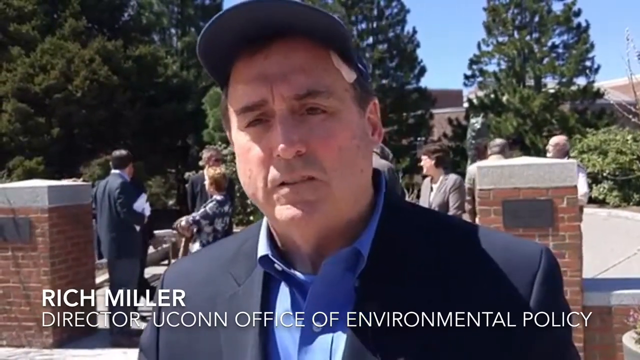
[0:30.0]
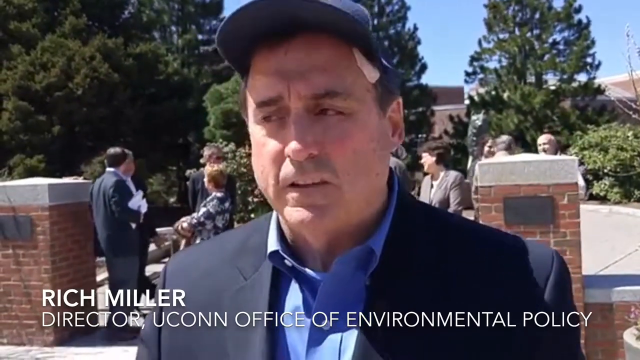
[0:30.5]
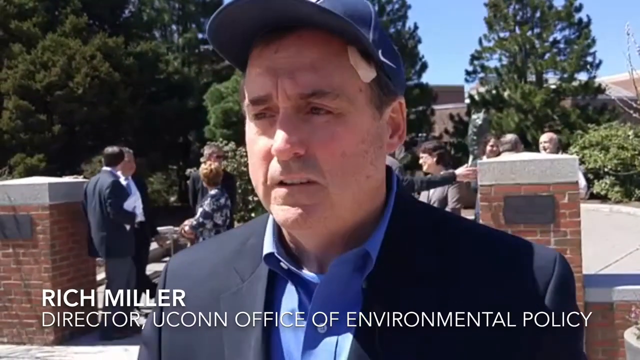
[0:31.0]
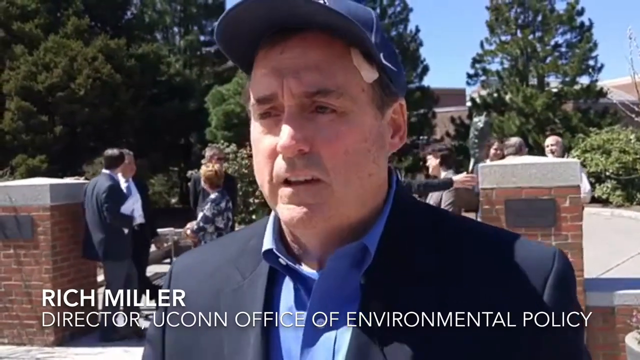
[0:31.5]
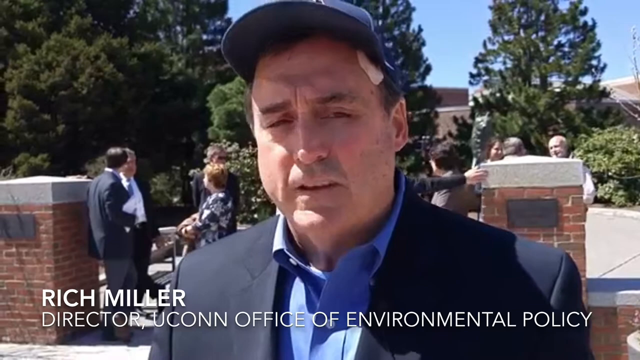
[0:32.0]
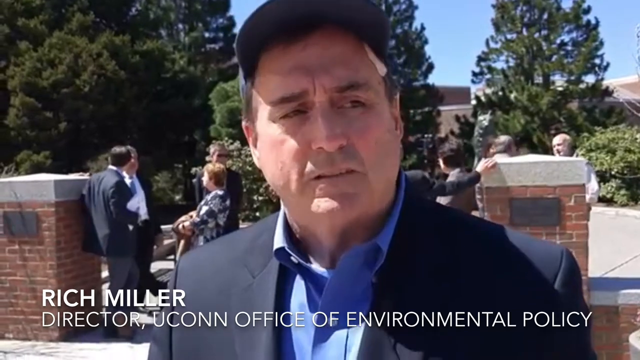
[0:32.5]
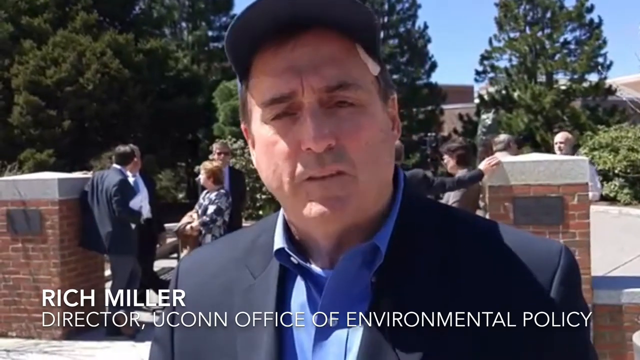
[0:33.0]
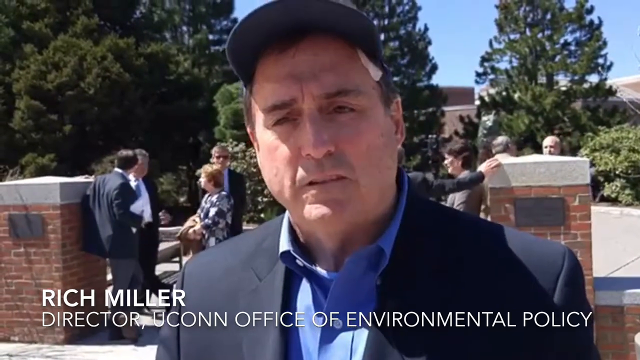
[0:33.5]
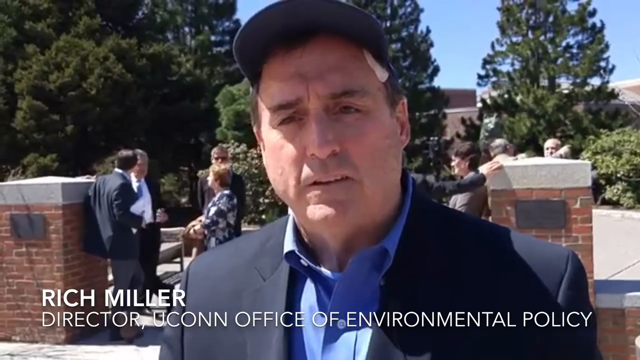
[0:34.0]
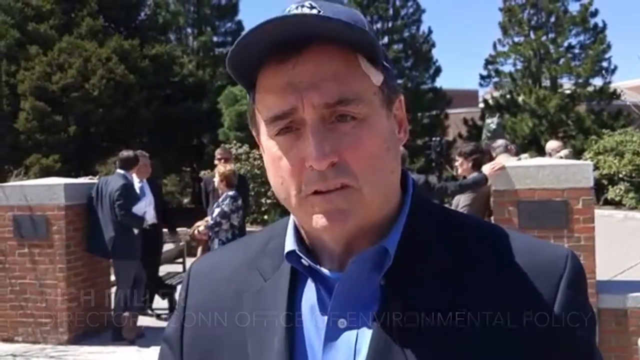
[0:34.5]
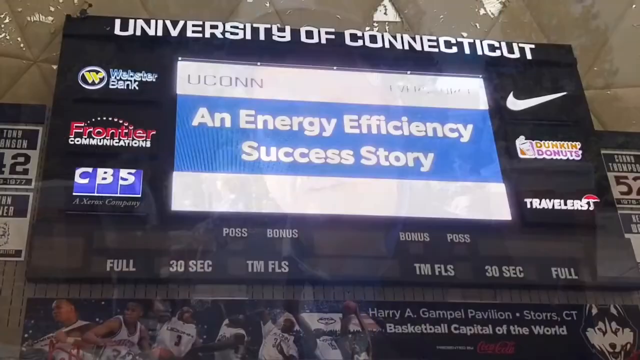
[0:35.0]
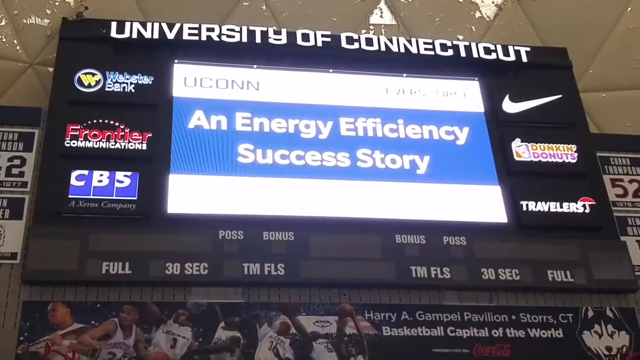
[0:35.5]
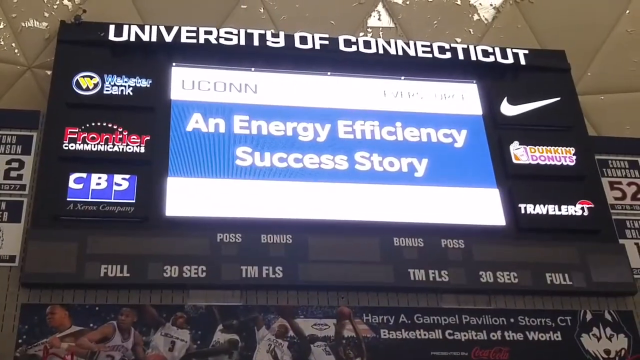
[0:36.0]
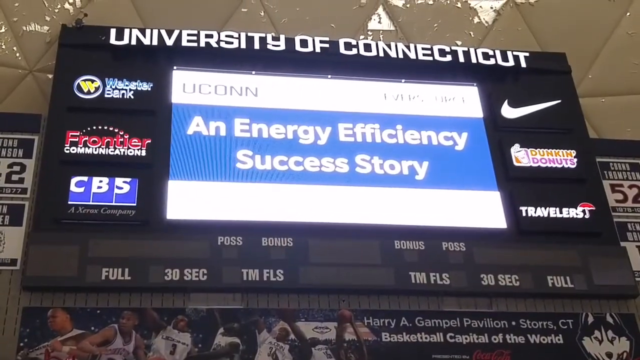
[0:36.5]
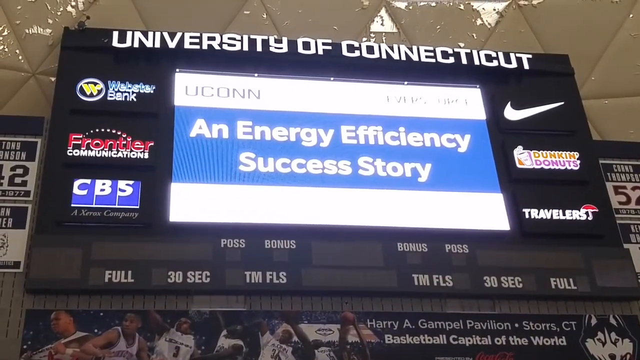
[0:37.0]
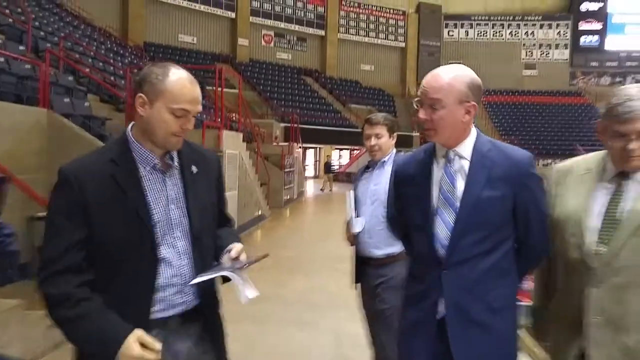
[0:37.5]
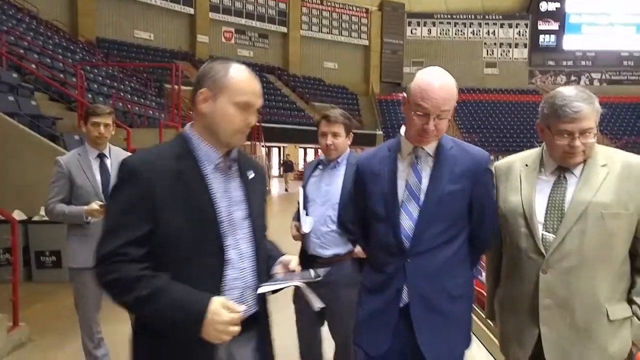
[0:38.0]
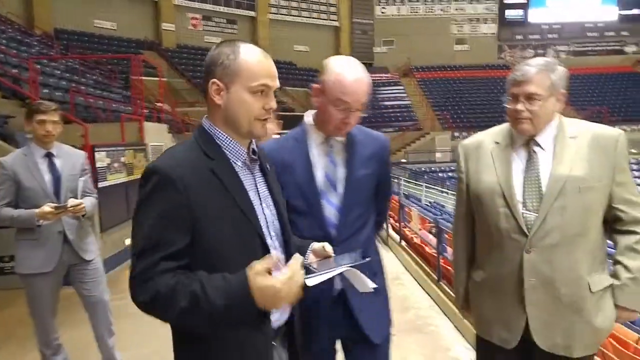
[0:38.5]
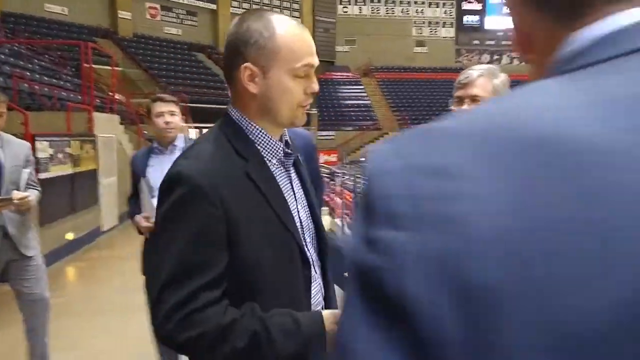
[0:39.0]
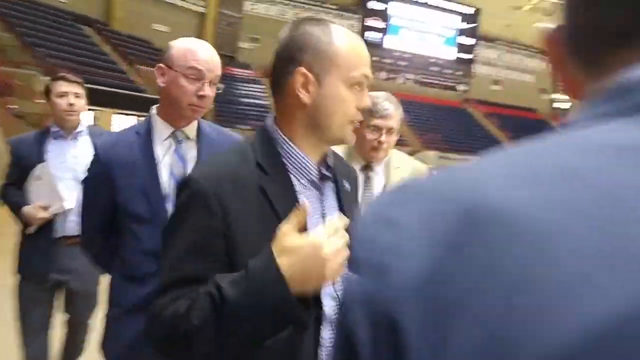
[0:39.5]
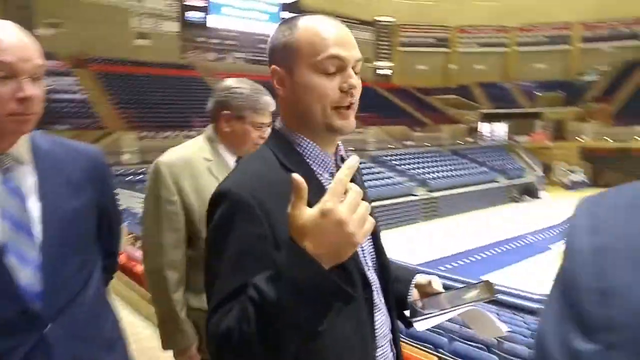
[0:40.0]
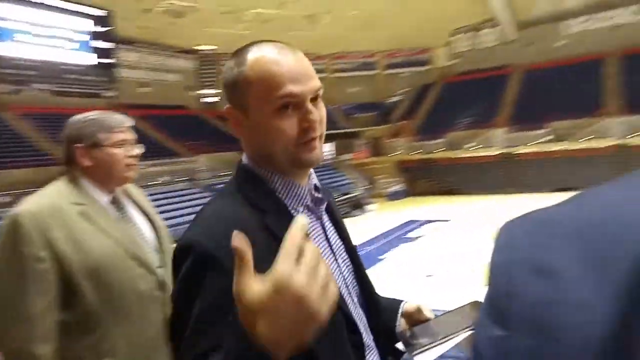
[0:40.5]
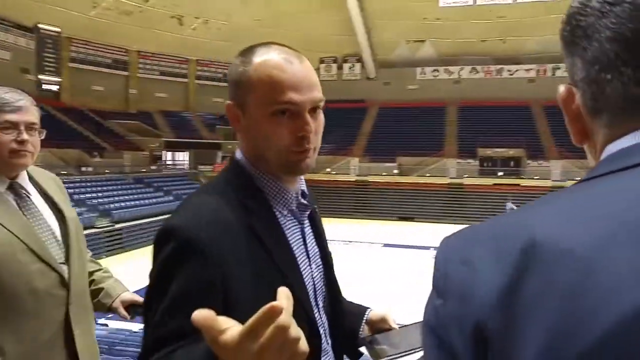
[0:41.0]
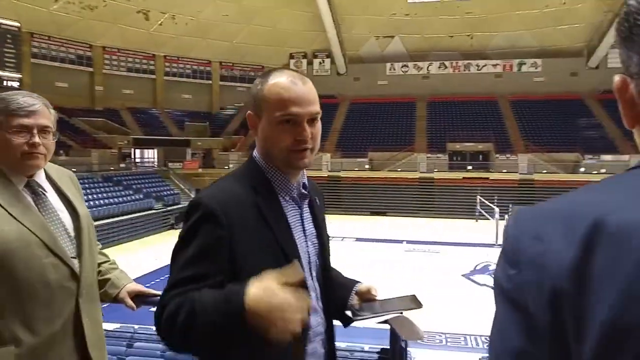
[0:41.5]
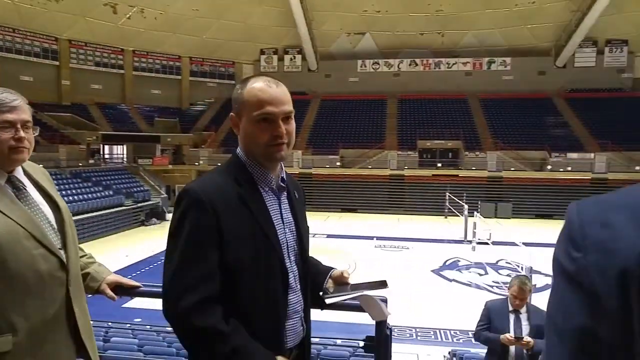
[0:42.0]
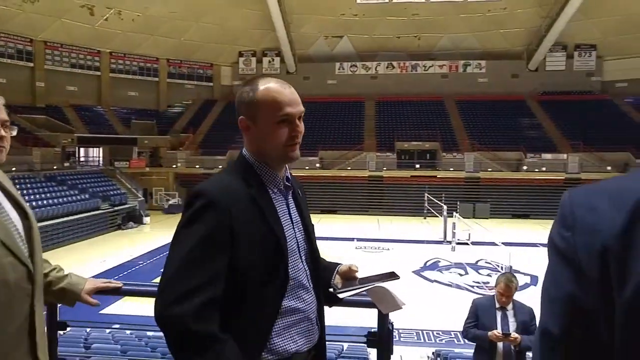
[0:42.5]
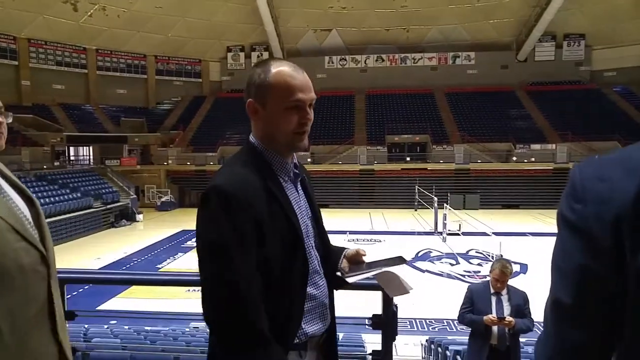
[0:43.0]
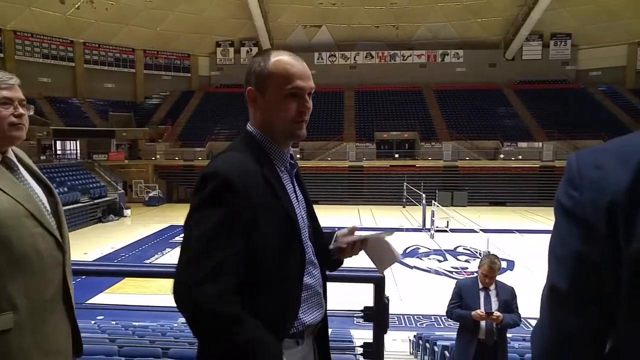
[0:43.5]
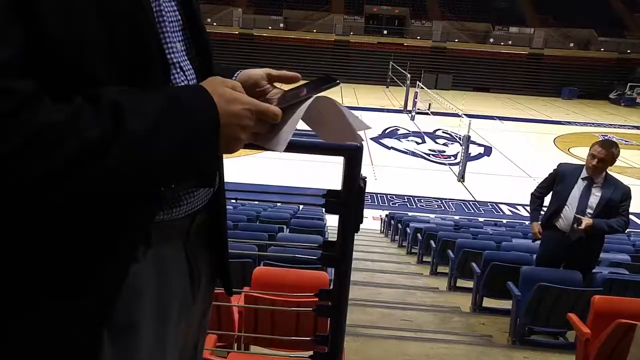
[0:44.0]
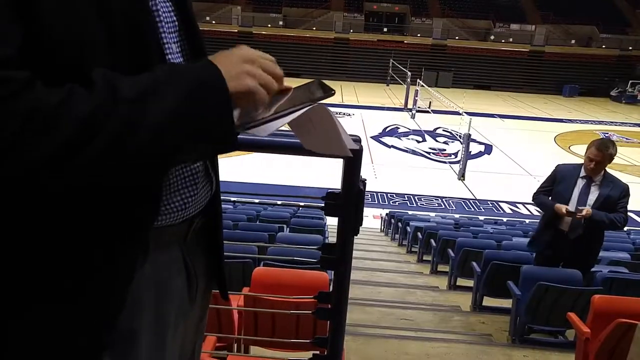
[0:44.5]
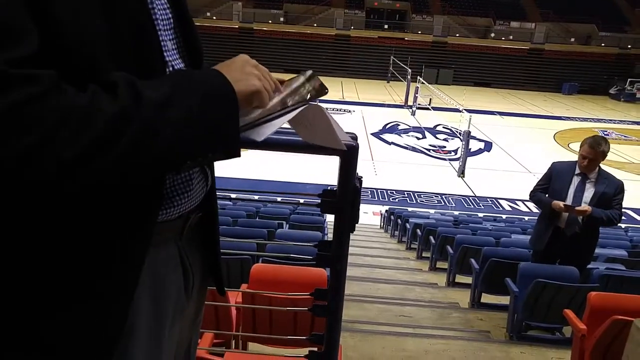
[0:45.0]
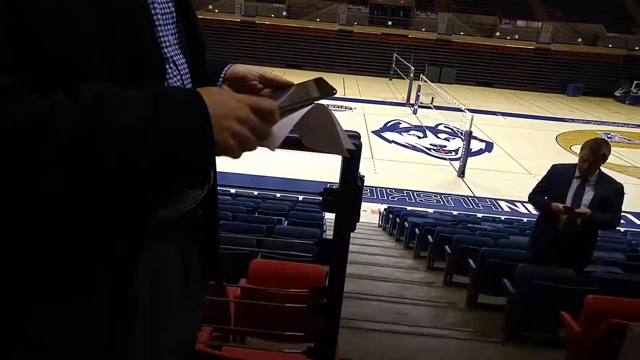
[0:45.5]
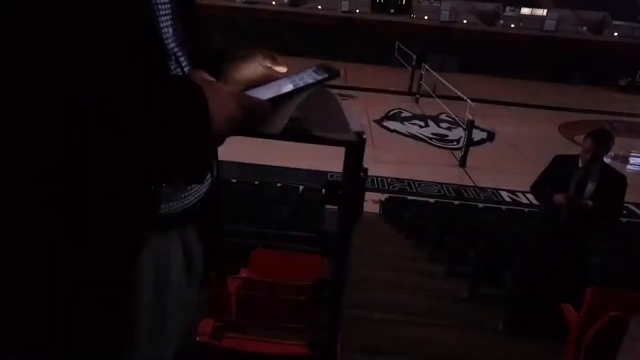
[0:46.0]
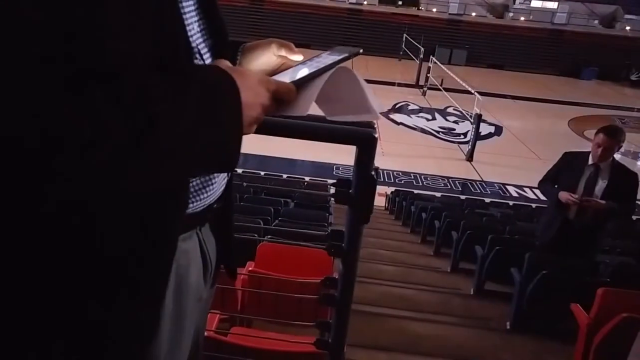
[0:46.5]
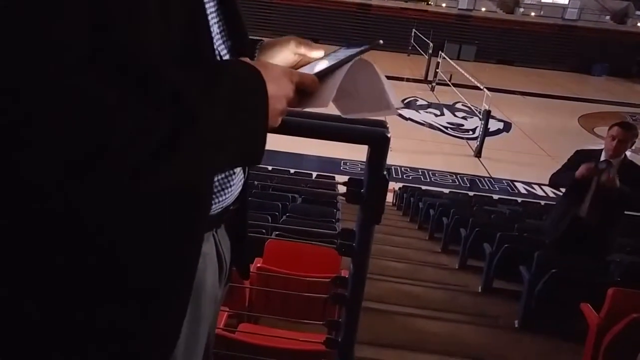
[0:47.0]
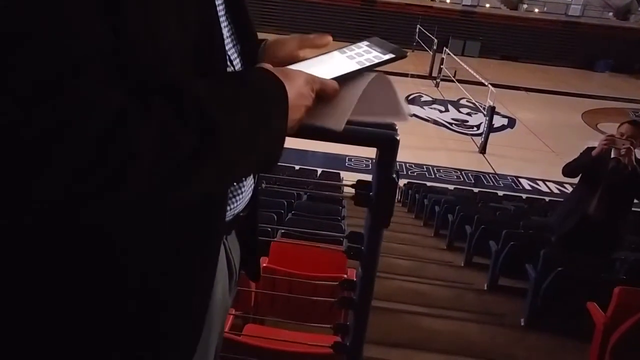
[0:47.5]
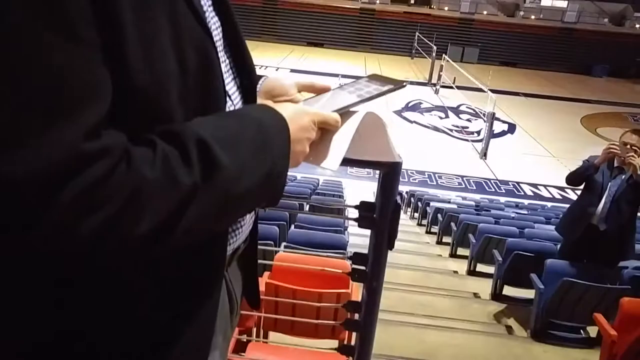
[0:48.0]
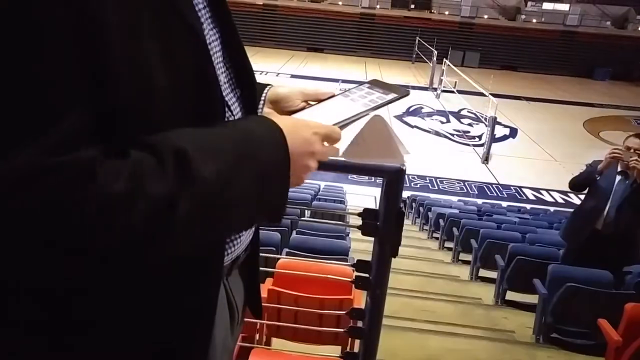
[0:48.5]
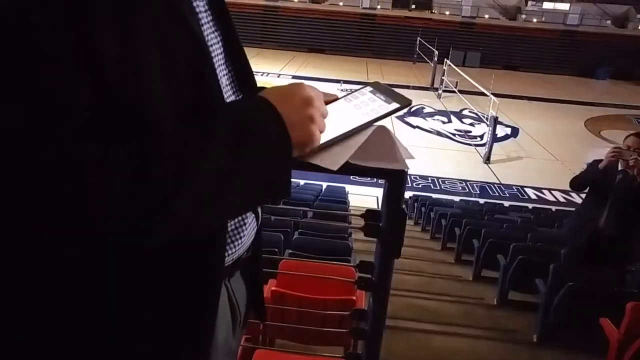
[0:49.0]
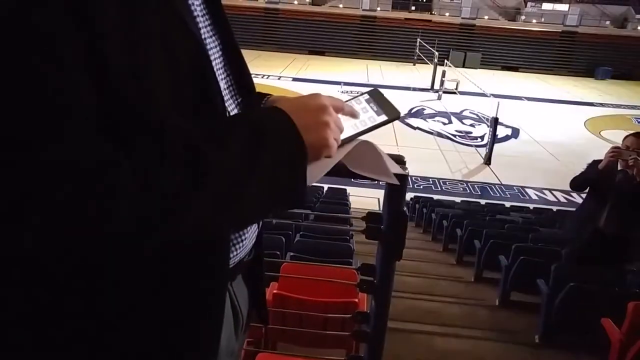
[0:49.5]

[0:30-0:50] Rich Miller continues talking in a short interview, then the scene shifts to the University of Connecticut, where a big board reads "UConn, an energy efficiency success story" and then shows its sponsors. A man, who looks like he may be an accountant, is talking. Afterwards the lights in the stadium appear to flicker, seemingly in response to what he is typing, as if he can control the building's lighting from a remote control or mobile device. The building is the volleyball court sports building.